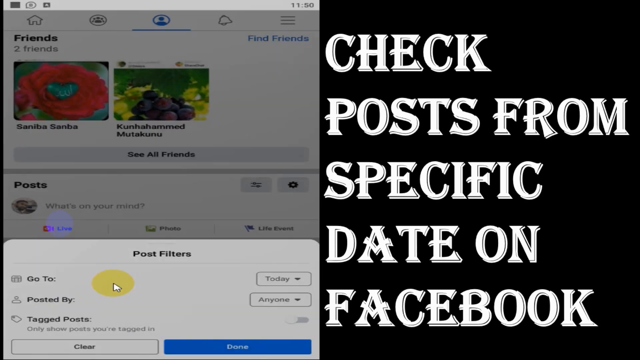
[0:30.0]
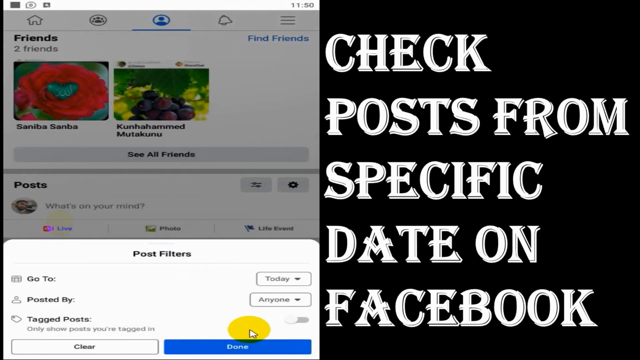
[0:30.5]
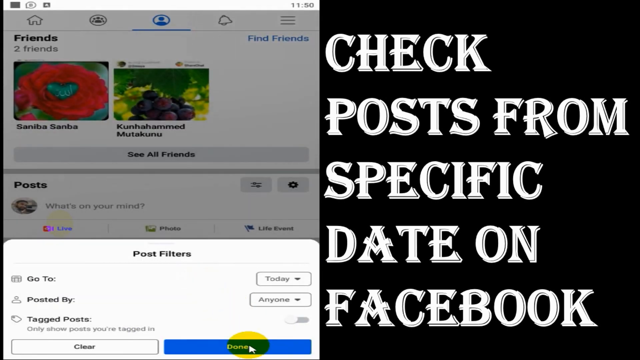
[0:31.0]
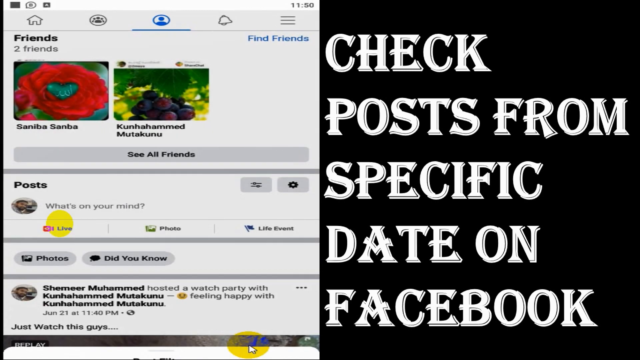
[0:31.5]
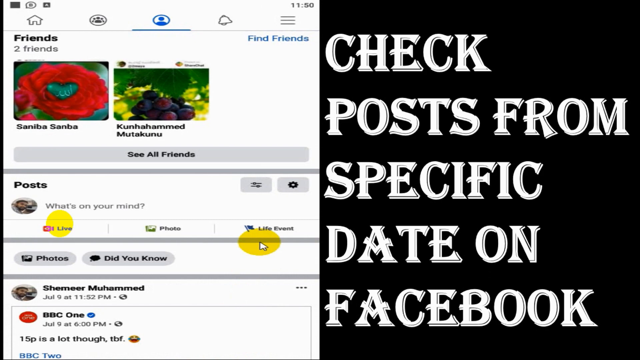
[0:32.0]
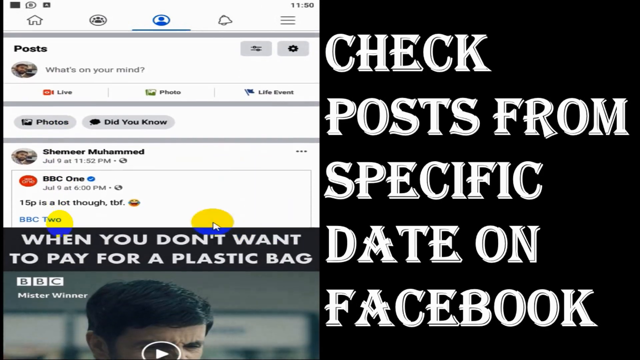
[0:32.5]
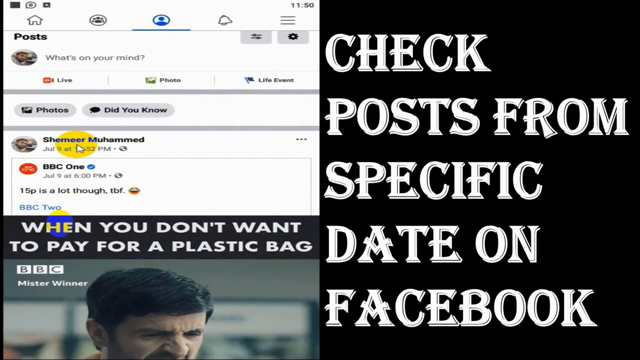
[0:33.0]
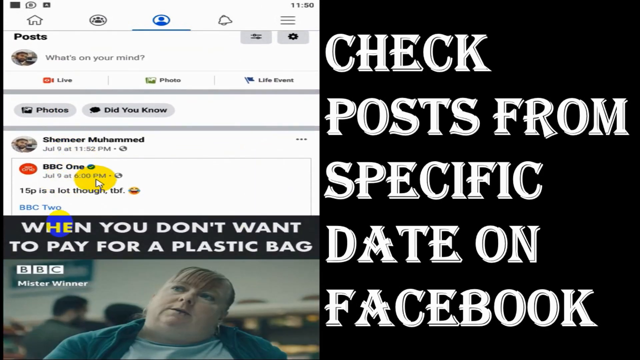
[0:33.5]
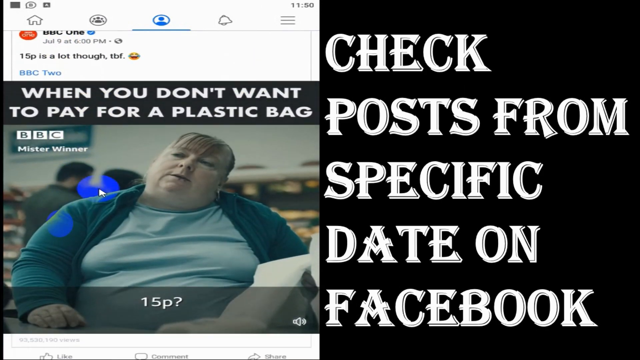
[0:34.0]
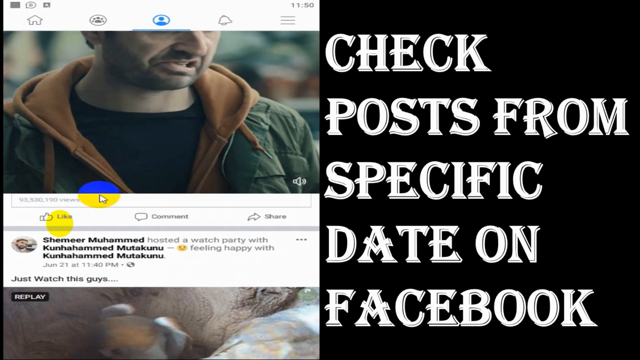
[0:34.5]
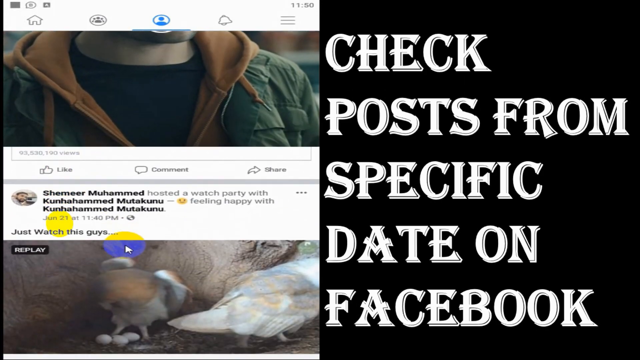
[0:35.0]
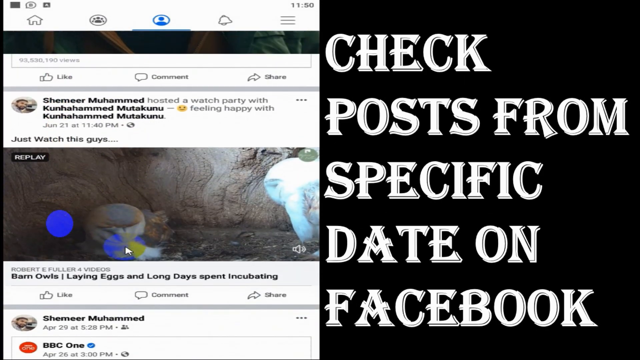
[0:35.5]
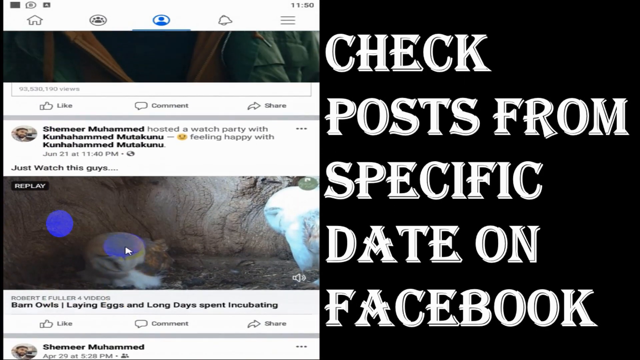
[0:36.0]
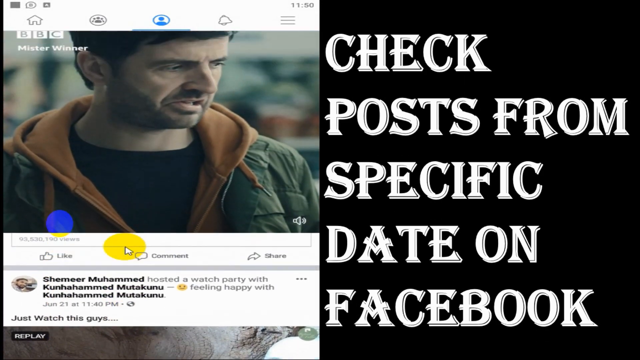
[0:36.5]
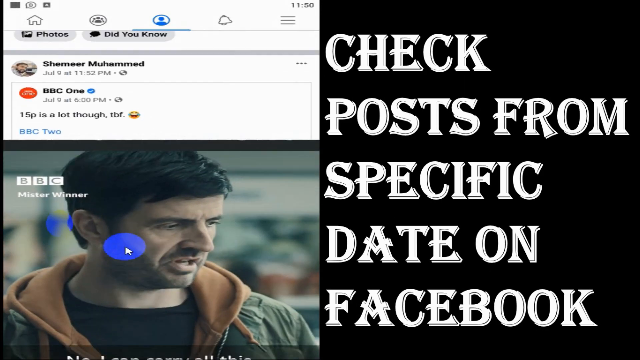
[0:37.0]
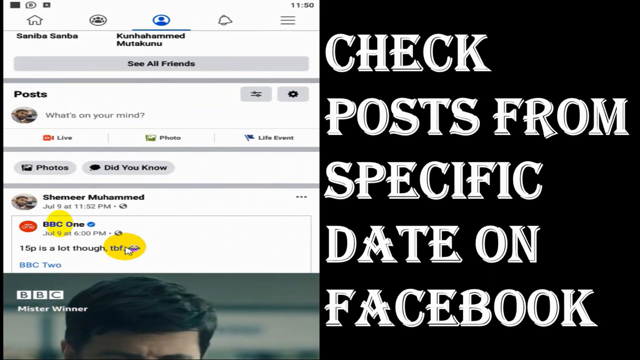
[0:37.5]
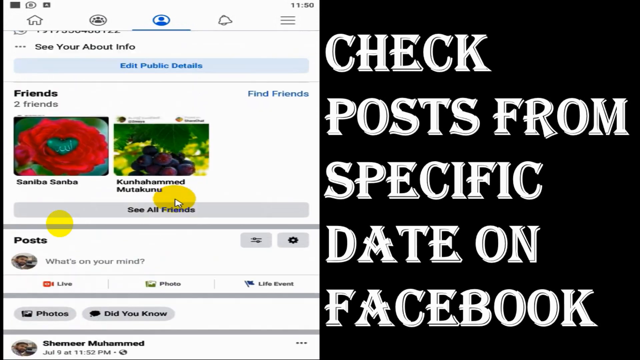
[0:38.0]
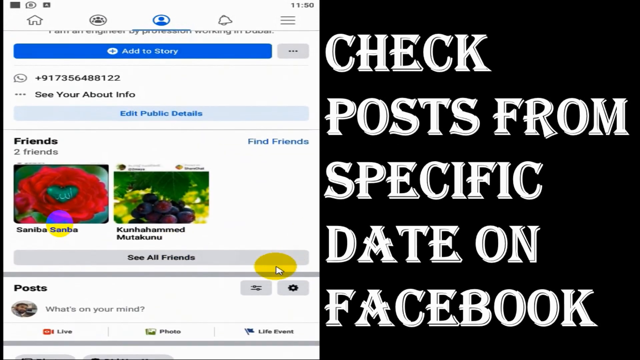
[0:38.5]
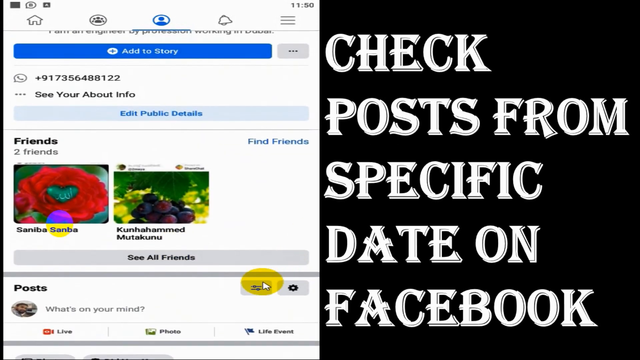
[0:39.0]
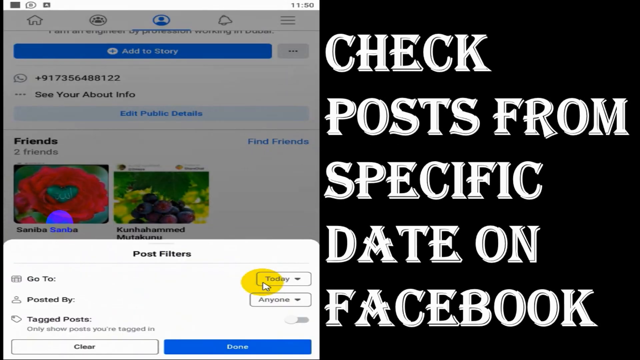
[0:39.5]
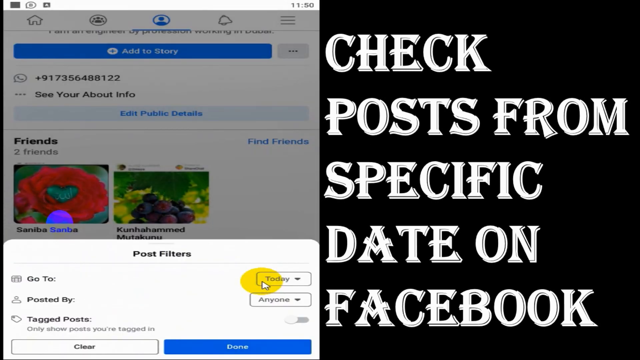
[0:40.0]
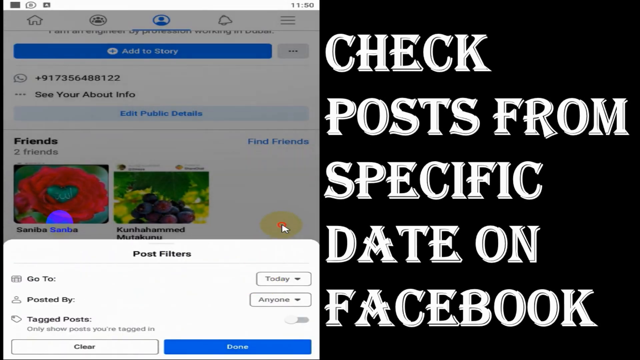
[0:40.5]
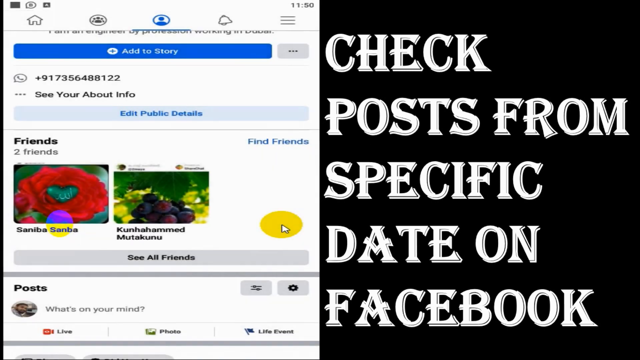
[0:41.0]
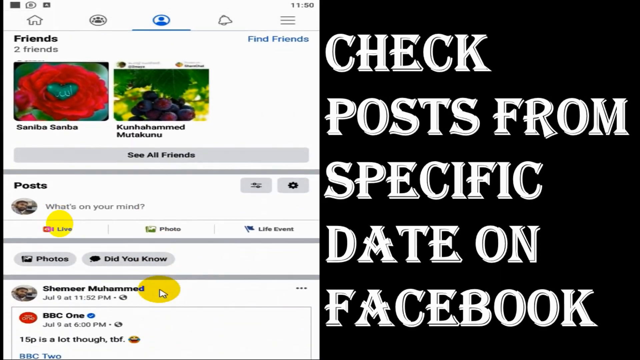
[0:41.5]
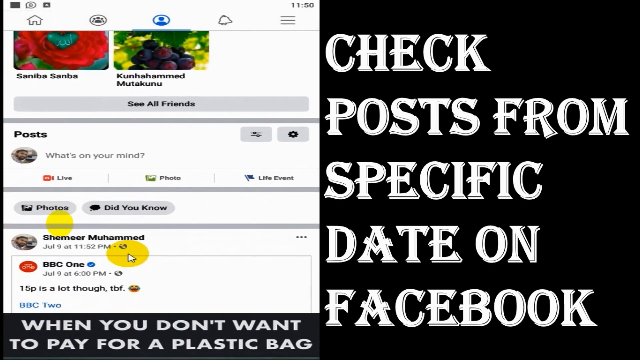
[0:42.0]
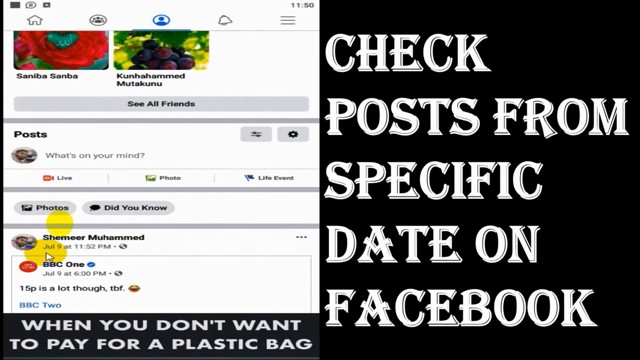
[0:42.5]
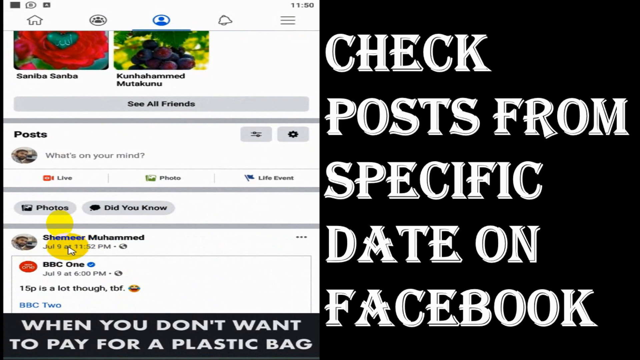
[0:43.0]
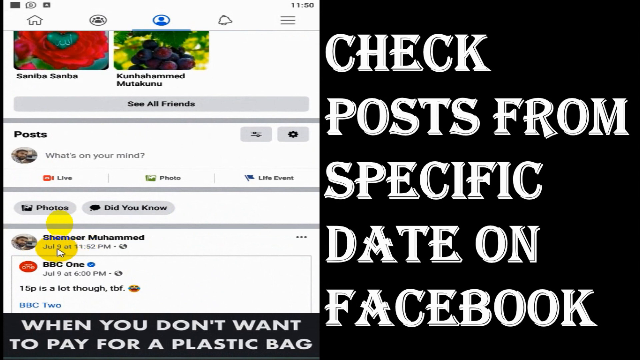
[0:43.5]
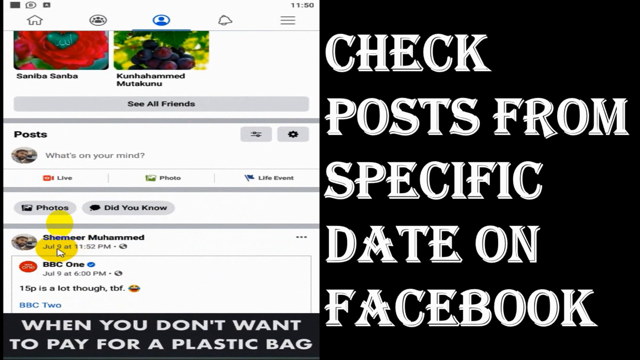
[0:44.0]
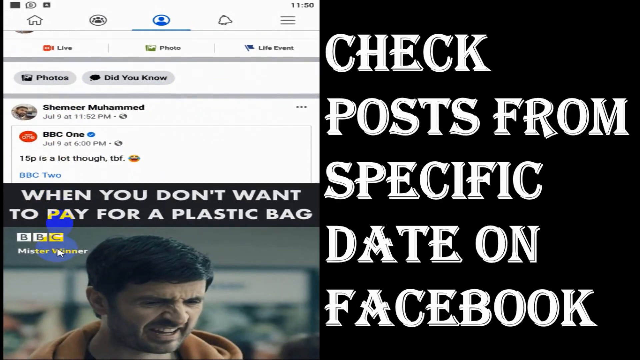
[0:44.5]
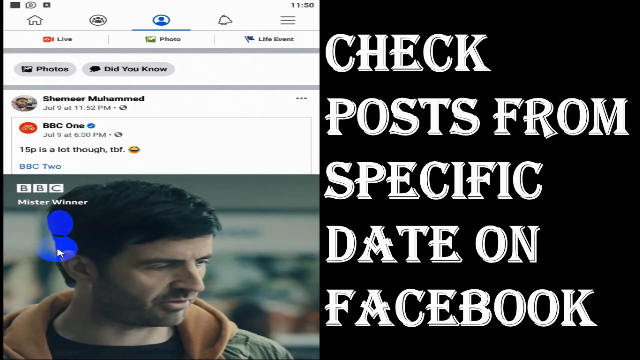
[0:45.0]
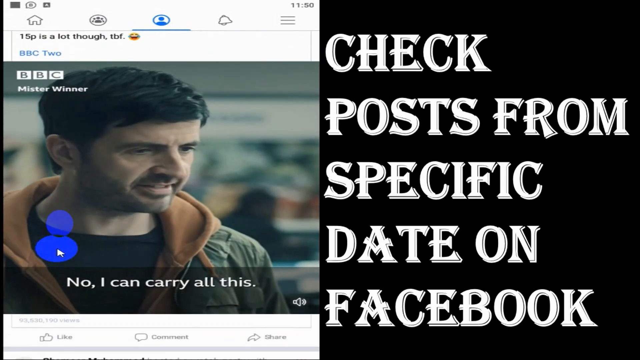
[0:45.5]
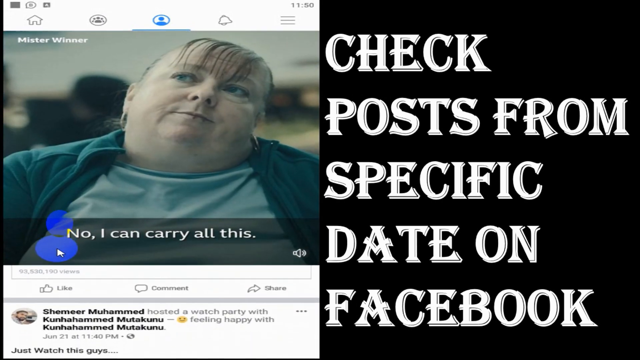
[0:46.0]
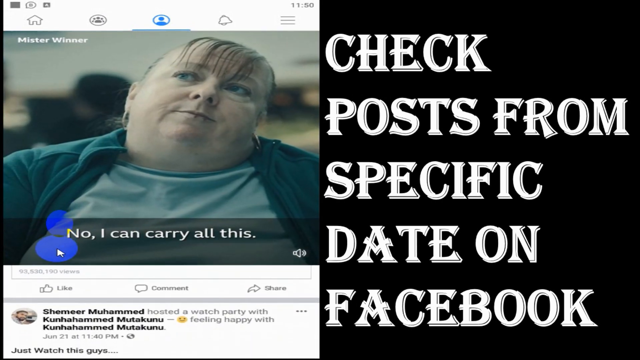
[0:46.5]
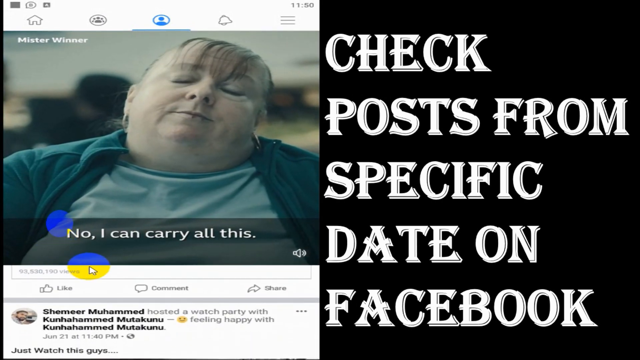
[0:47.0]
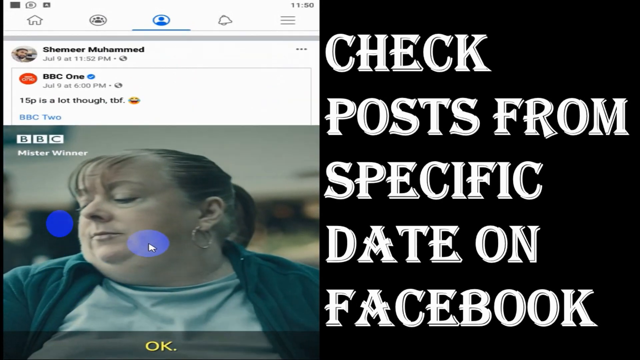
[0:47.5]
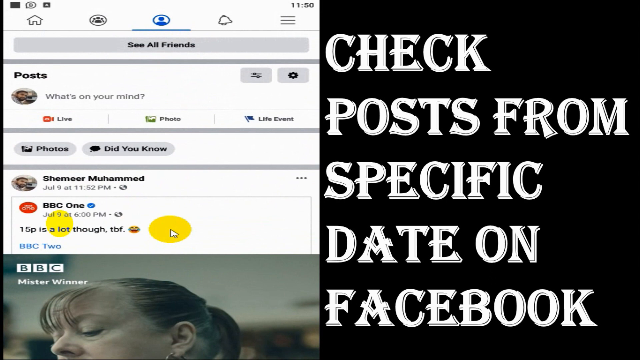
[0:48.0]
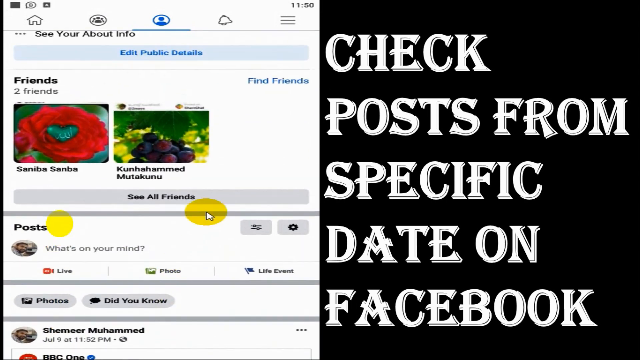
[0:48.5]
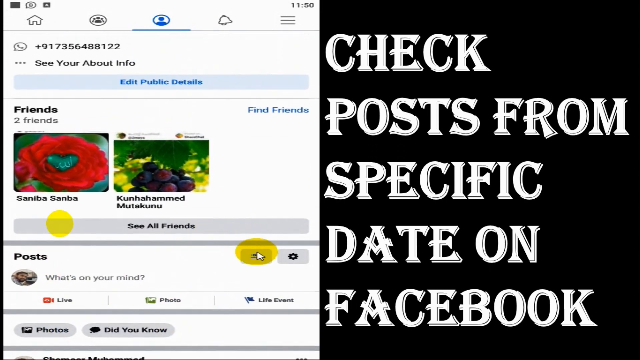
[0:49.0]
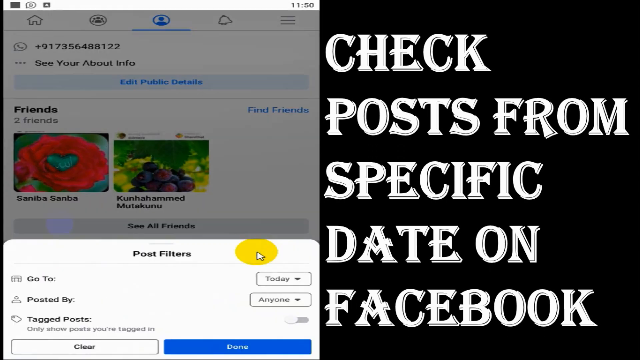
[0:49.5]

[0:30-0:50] Facebook is on the left, with the words "Check posts from specific date on Facebook" on the right. A cursor highlighted in yellow goes to the bottom right corner of the screen and clicks a button that says "done" on a pop-up window called post filters. The screen is then scrolled down, showing part of a meme and a post by BBC One. The cursor hovers over the name BBC One. The page is scrolled down to show more of the video meme, then scrolled again to another post. The page is scrolled back up to near the top, and the hamburger button next to the post area is clicked, bringing up the post filters screen again. The user clicks off it, making it go away, scrolls down, and hovers over a date under the name of one of his posts. He scrolls down past the video meme and back up to the posts area, and again clicks the hamburger button.